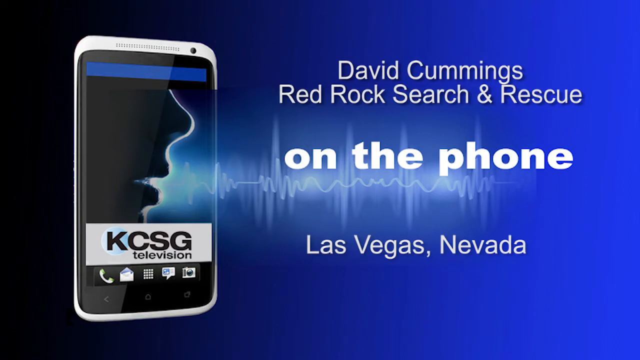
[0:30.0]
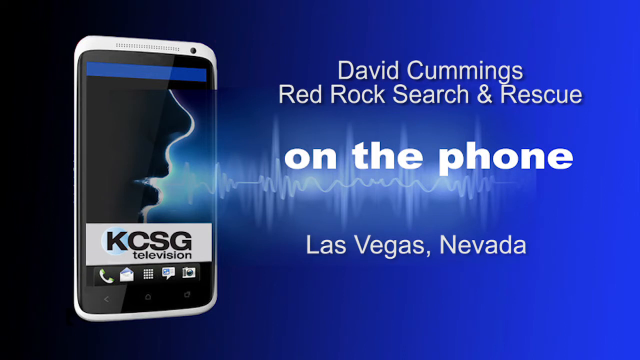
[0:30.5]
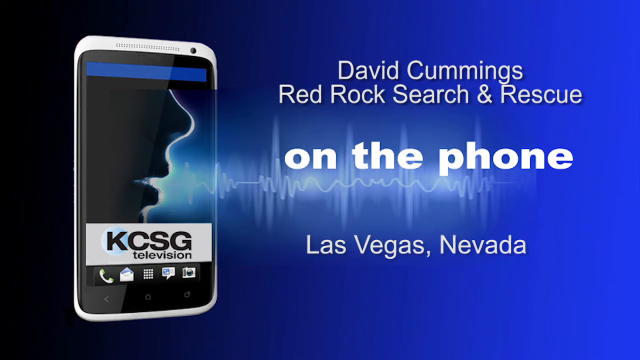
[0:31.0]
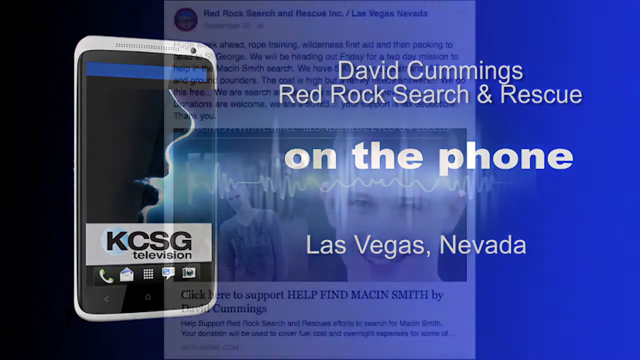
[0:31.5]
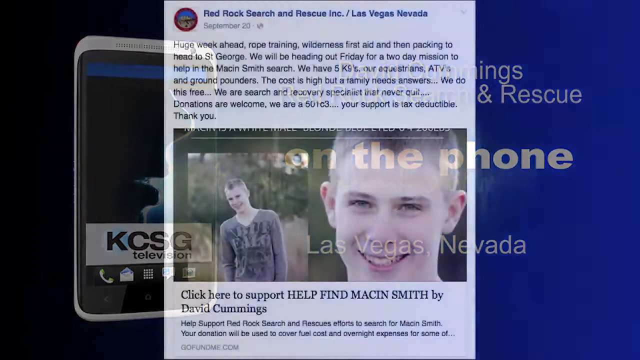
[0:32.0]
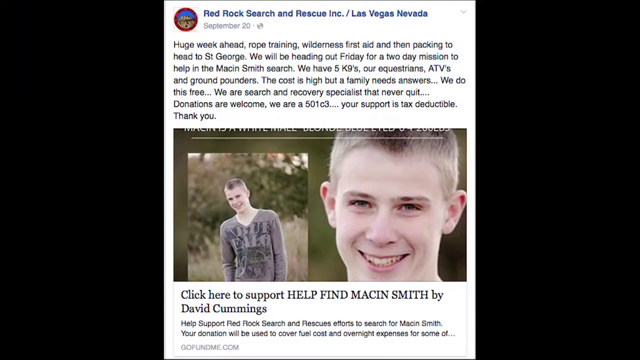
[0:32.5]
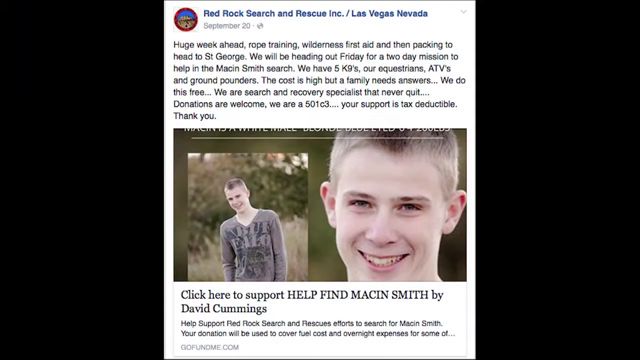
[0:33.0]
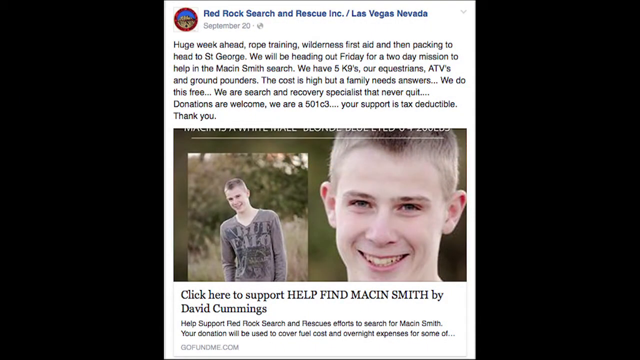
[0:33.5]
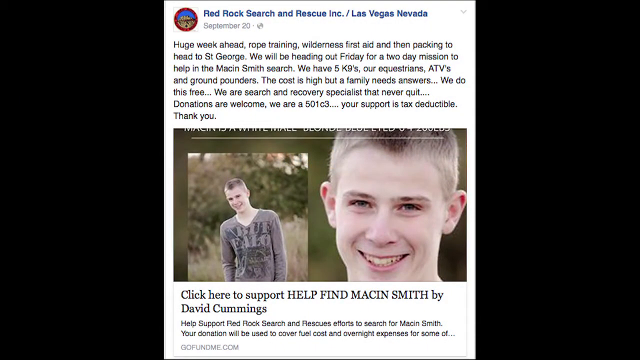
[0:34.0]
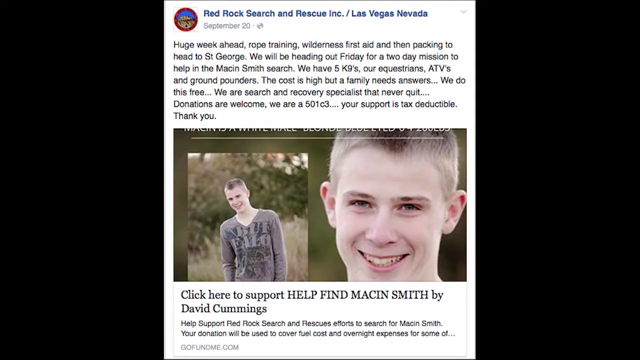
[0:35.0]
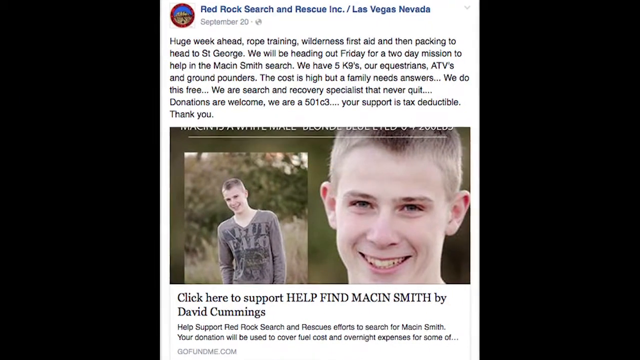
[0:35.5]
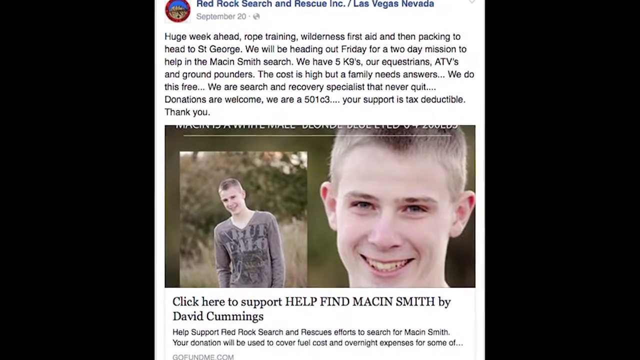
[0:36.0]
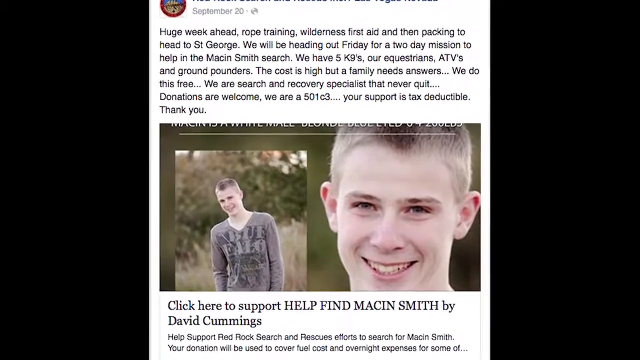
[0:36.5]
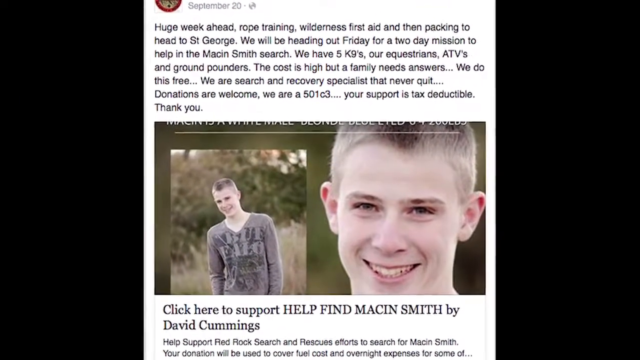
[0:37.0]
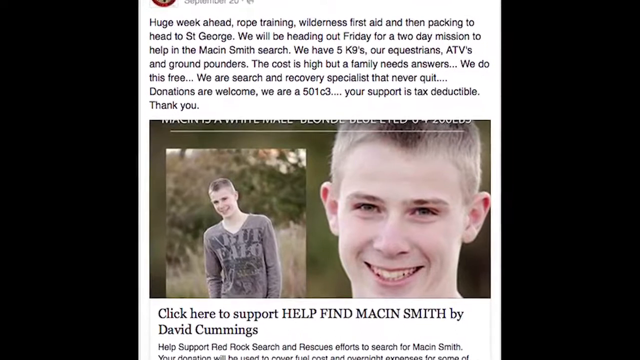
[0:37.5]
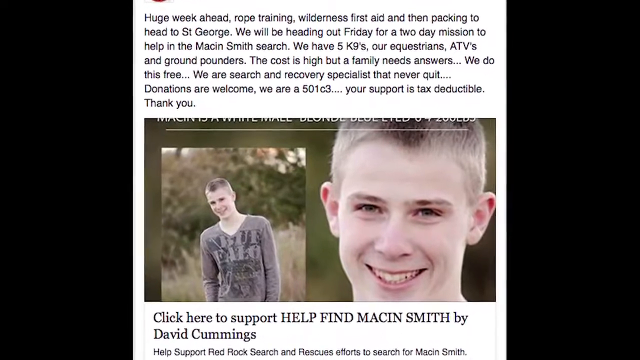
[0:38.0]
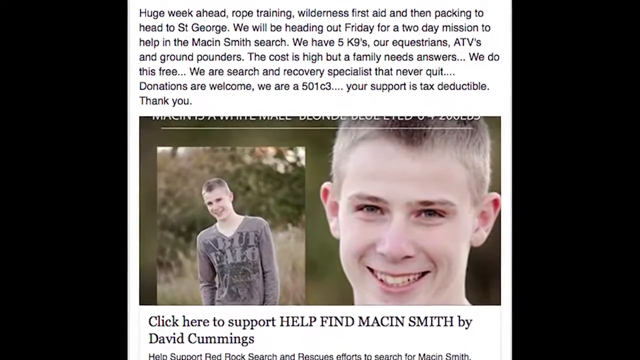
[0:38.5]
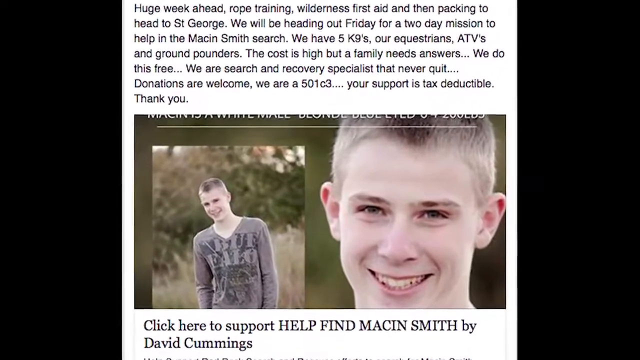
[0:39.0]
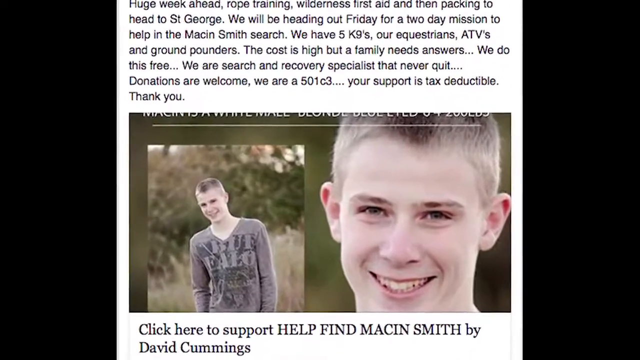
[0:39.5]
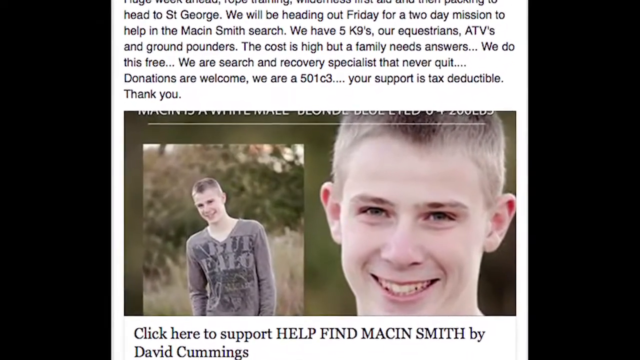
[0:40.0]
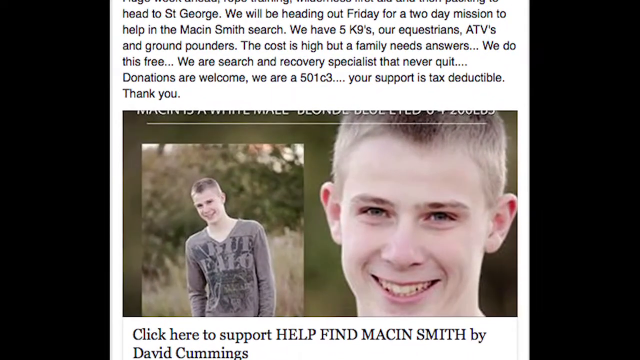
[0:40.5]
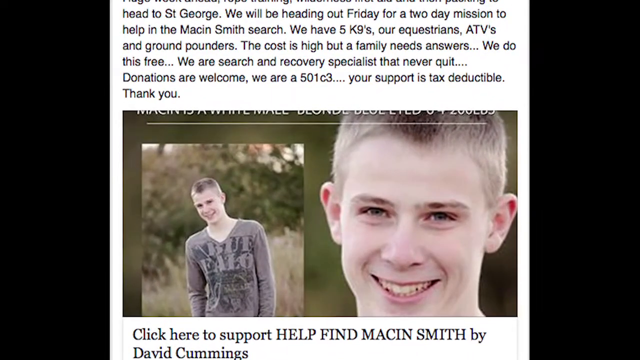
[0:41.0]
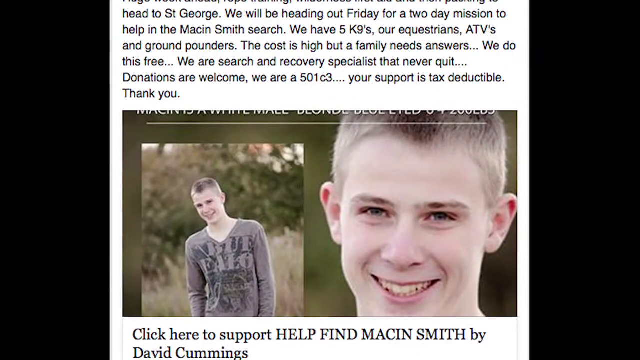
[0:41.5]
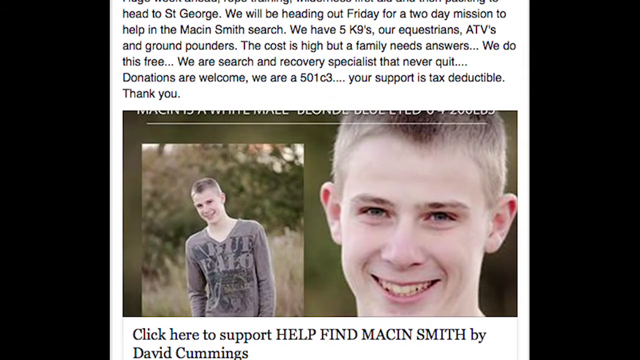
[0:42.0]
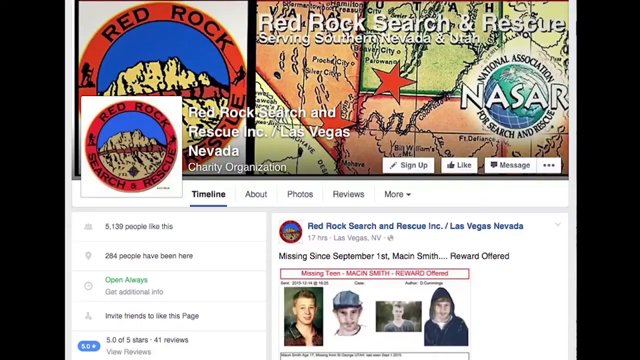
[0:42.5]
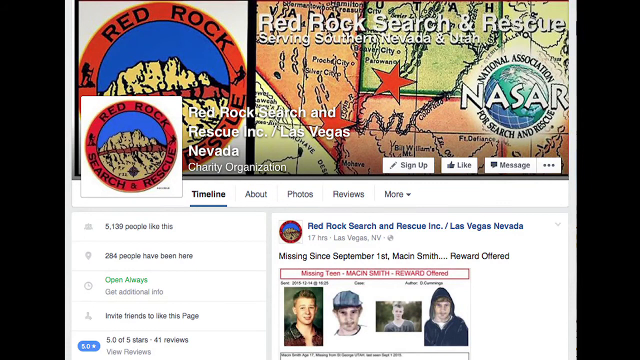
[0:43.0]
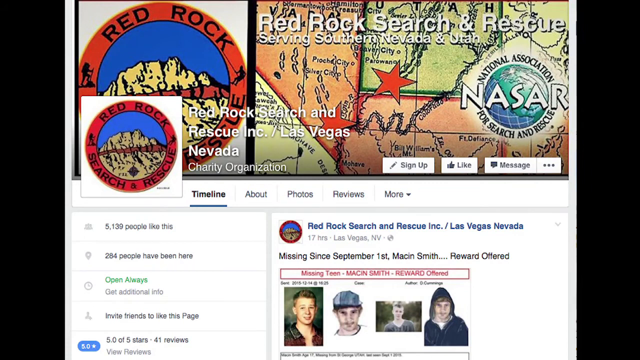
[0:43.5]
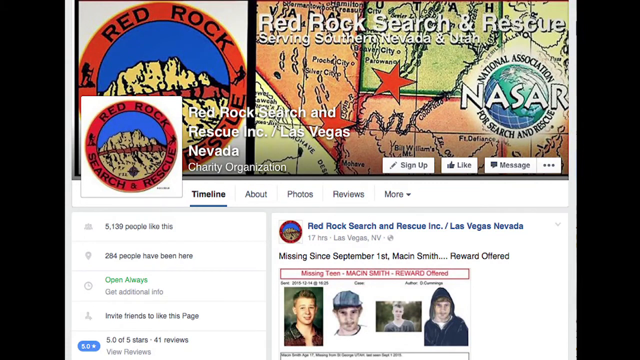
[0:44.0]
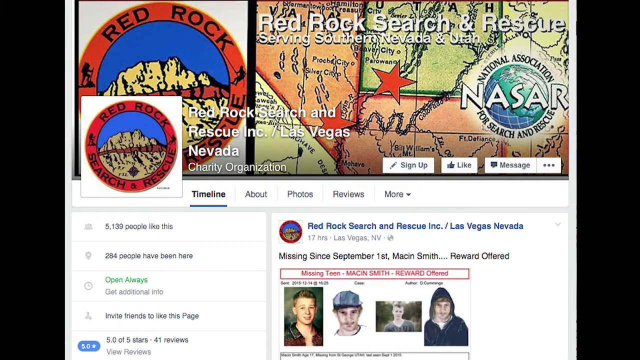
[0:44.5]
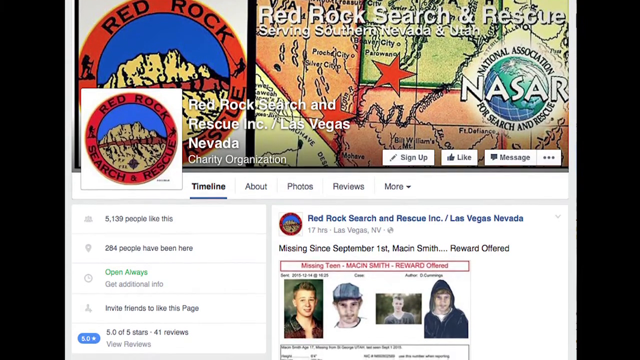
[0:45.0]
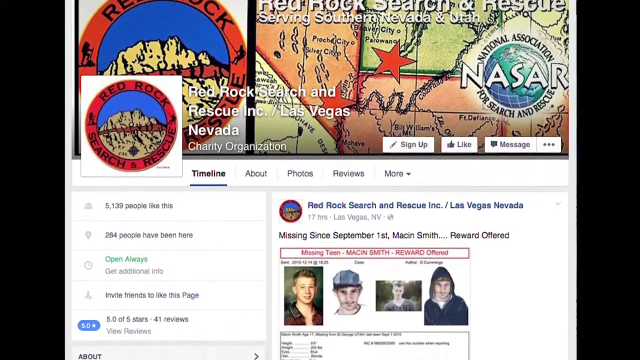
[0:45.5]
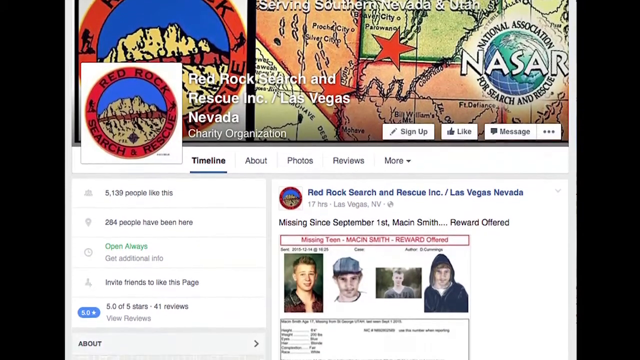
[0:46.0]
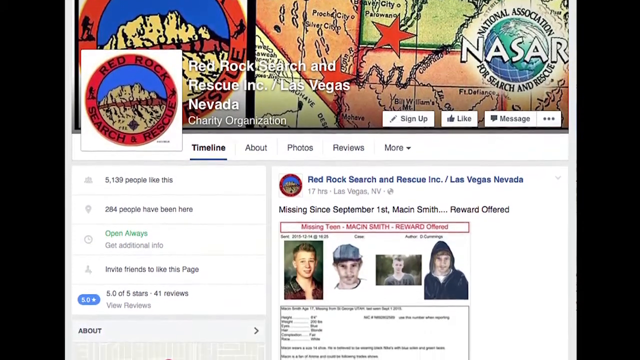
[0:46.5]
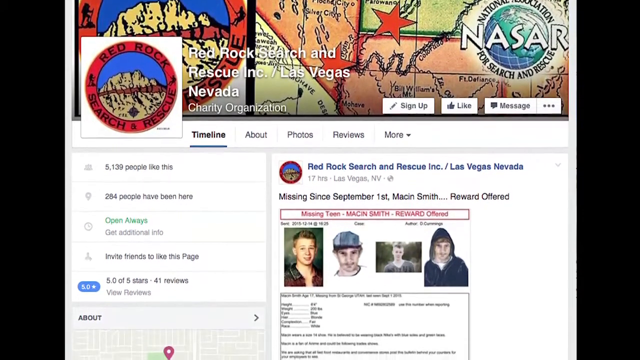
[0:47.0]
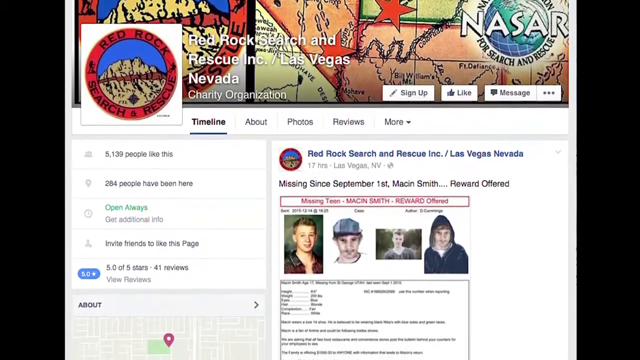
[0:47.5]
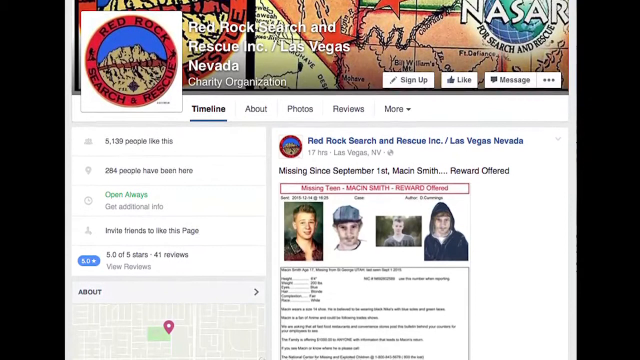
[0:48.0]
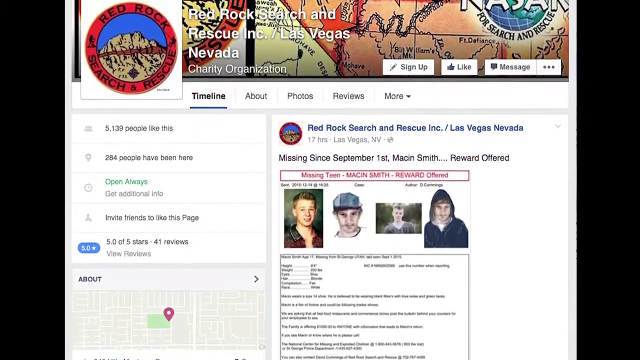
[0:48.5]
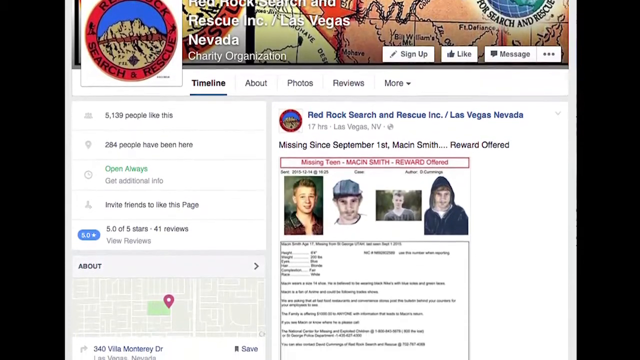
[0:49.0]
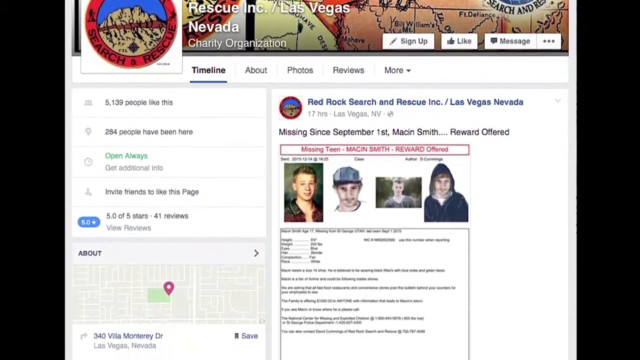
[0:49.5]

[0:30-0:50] The text stating that David Cummins of Red Rock Search and Rescue is on the phone remains on screen. Next comes a post, perhaps from Facebook, from Red Rock Search and Rescue, dated September 20th. It reads: "Huge week ahead. Rope training, wilderness first aid, and then packing to head to St. George. We will be heading out Friday for a two-day mission to help in the Mackin Smith search. We have five canines, our equestrians, ATVs, and ground pounders. The cost is high, but a family needs answers. We do this free. We are a search and recovery specialist that never quits. Donations are welcome. We are a 501c3. Your support is tax deductible. Thank you." The name is spelled M-A-C-K-I-N. A website for Red Rock Search and Rescue, headquartered in Las Vegas, then appears, prominently featuring the missing boy on its page.